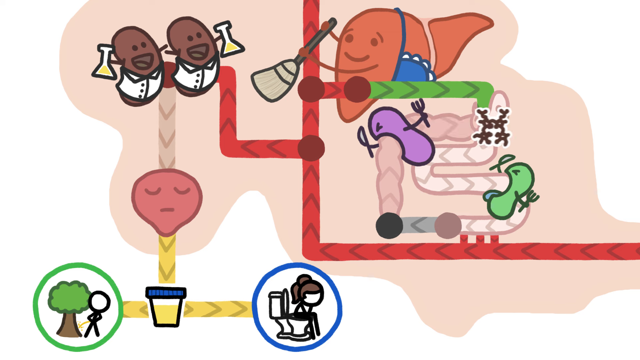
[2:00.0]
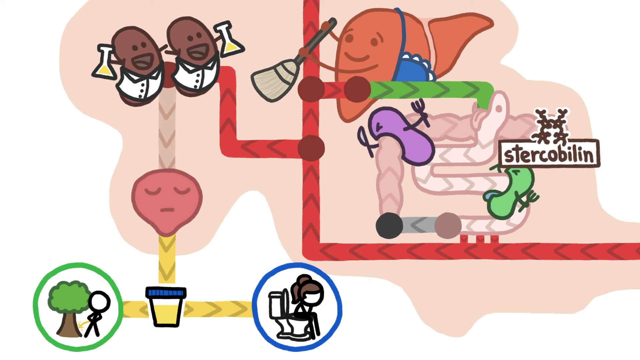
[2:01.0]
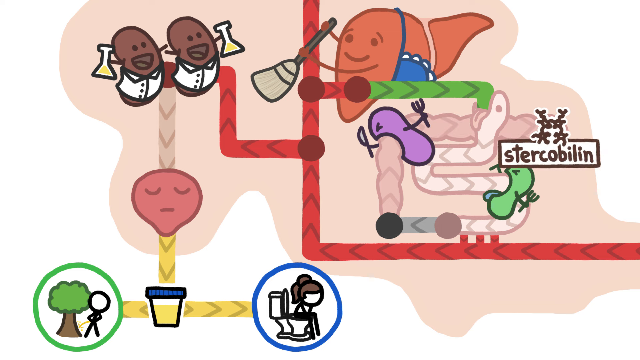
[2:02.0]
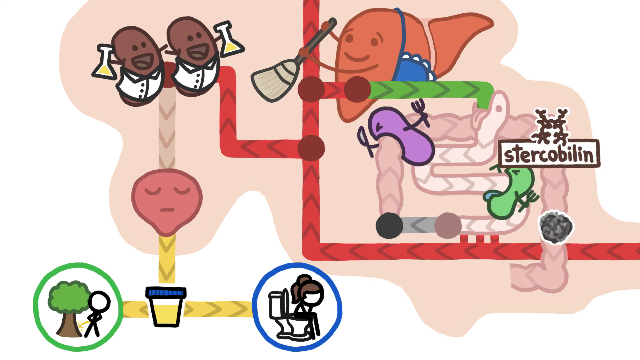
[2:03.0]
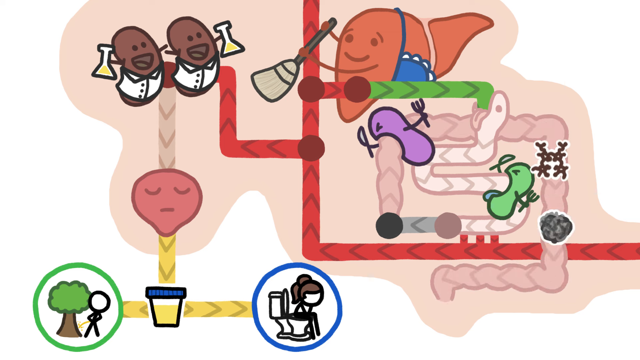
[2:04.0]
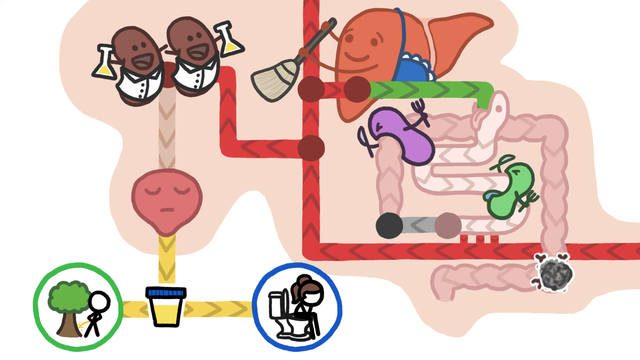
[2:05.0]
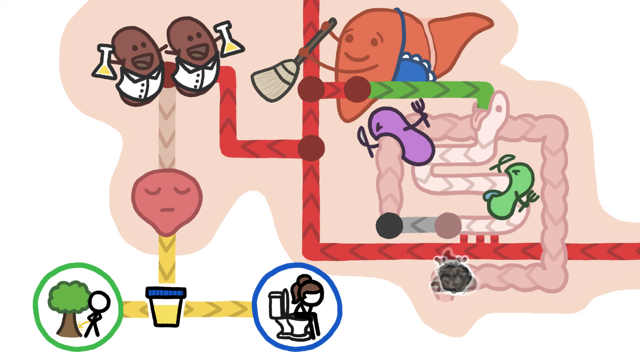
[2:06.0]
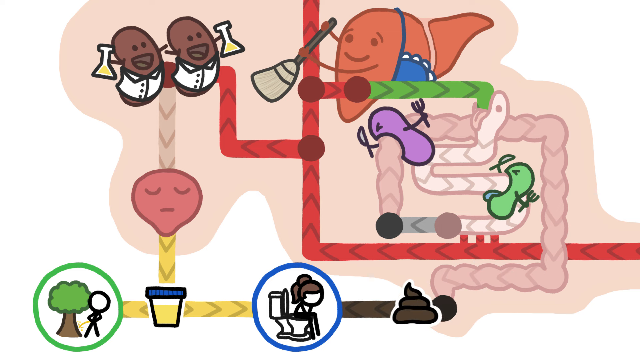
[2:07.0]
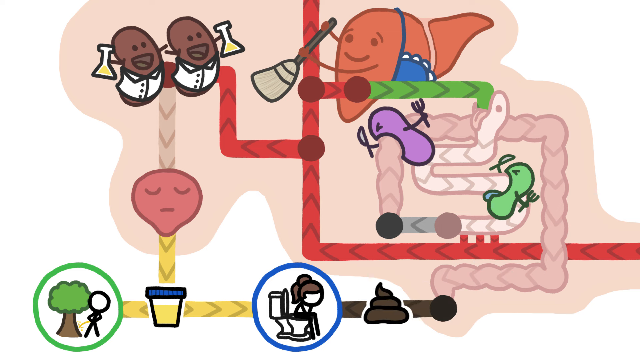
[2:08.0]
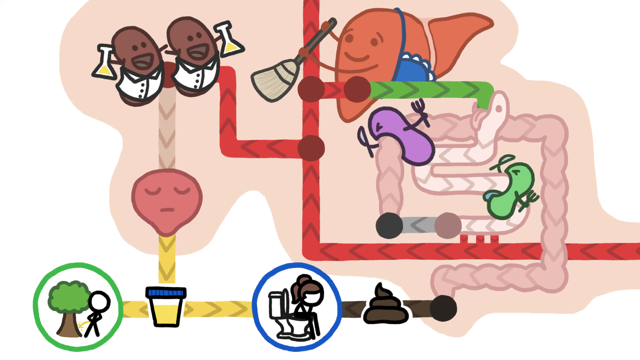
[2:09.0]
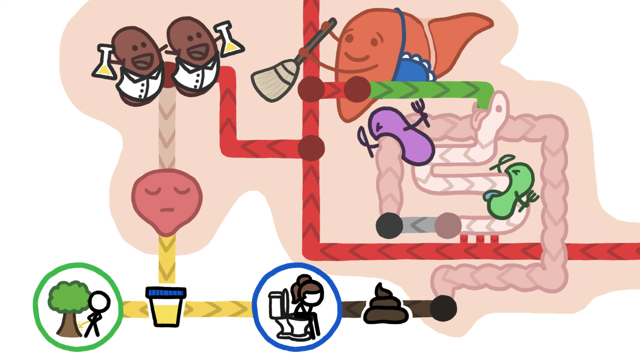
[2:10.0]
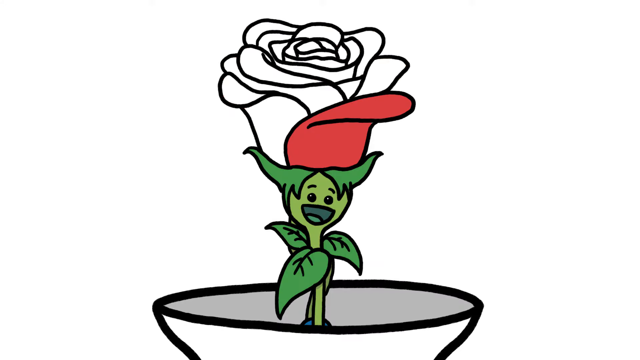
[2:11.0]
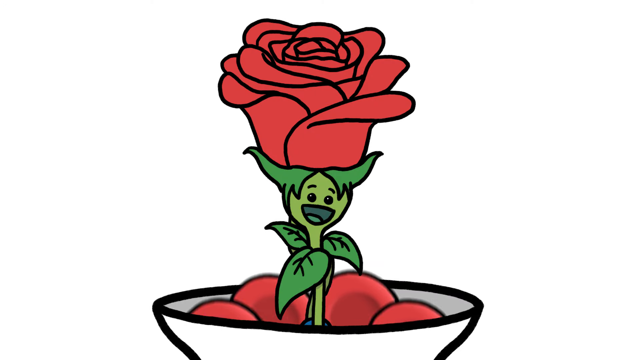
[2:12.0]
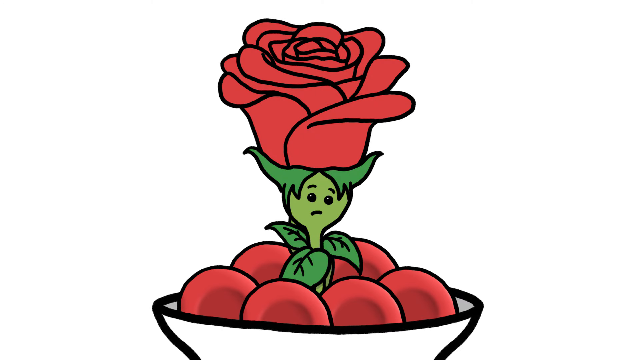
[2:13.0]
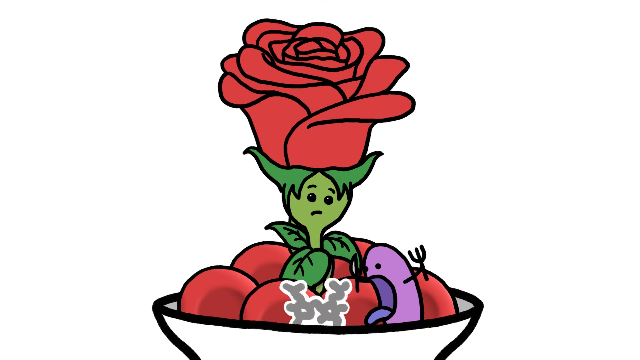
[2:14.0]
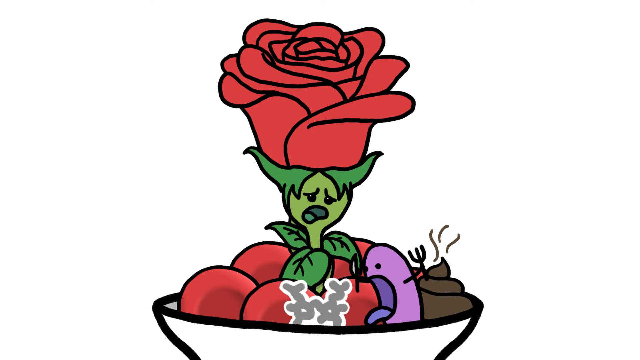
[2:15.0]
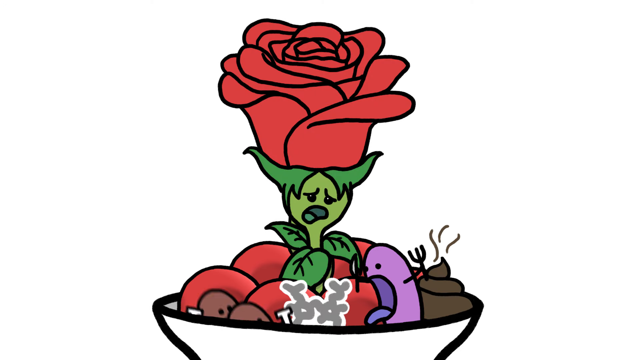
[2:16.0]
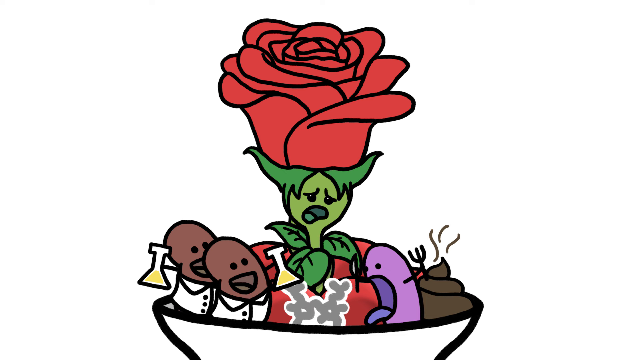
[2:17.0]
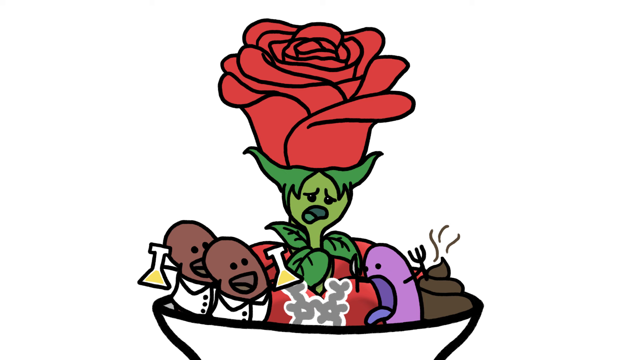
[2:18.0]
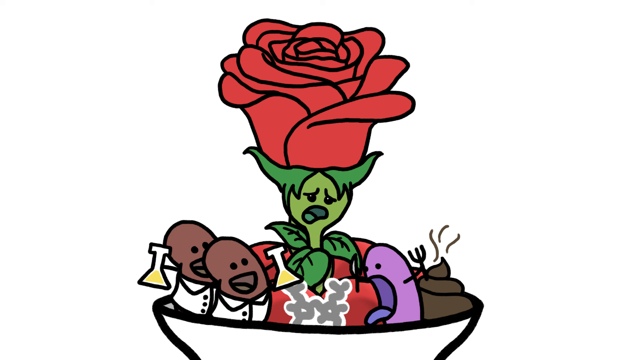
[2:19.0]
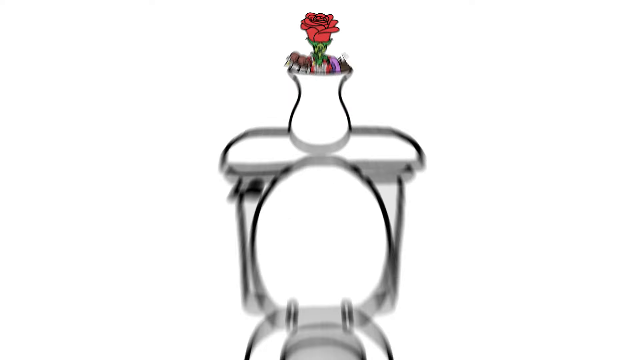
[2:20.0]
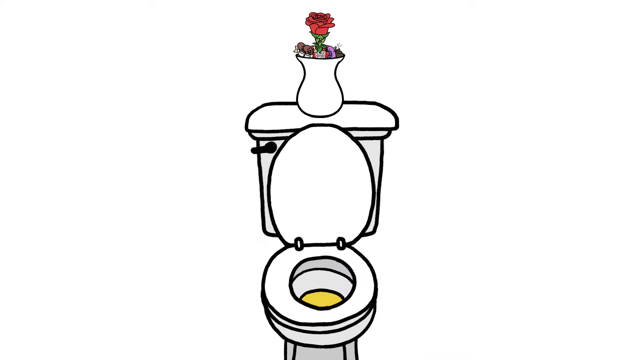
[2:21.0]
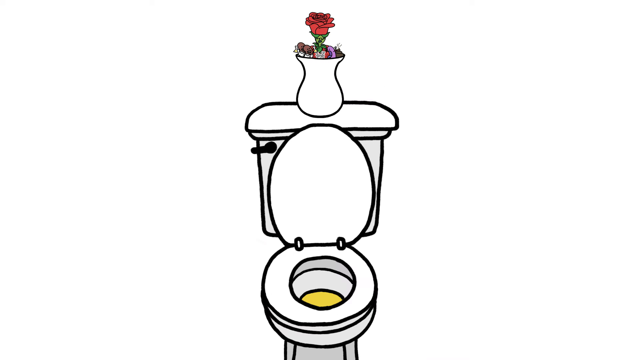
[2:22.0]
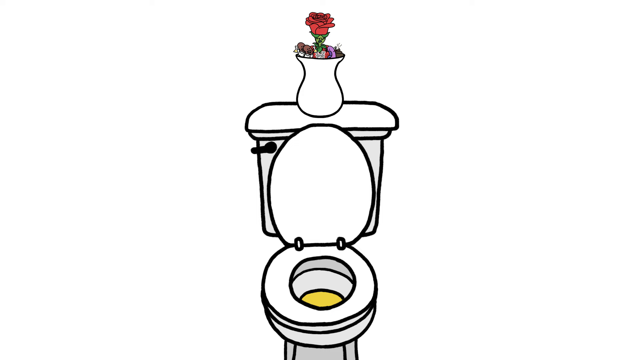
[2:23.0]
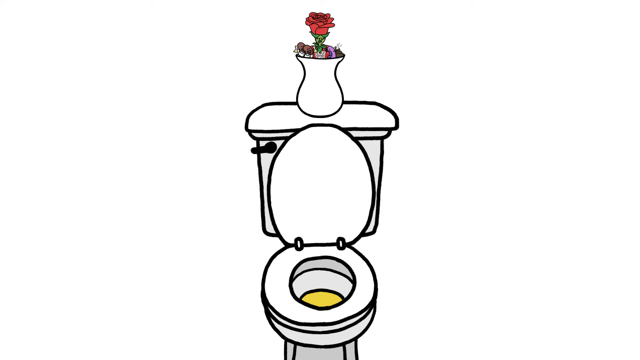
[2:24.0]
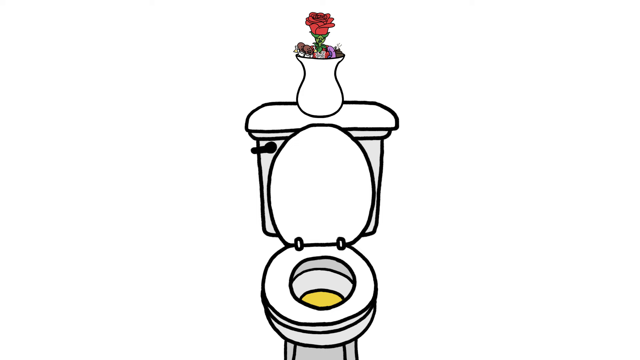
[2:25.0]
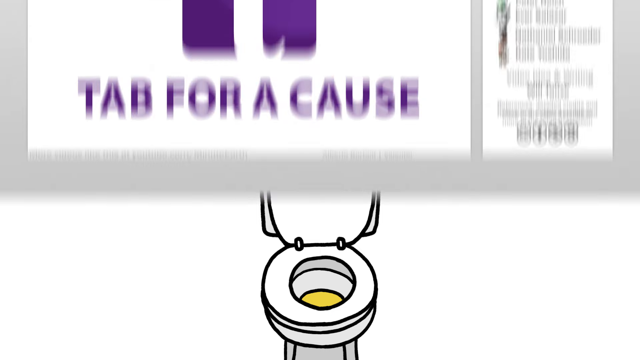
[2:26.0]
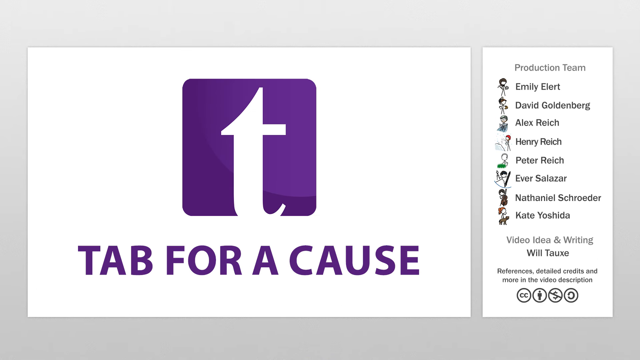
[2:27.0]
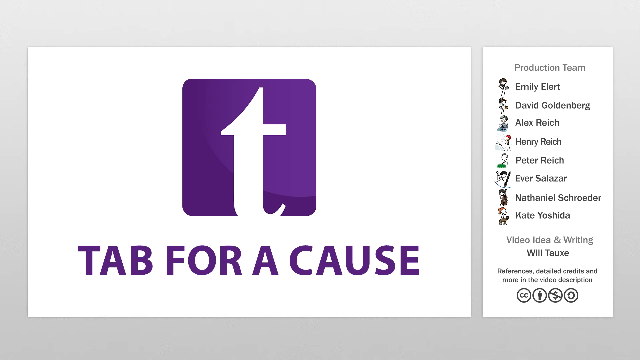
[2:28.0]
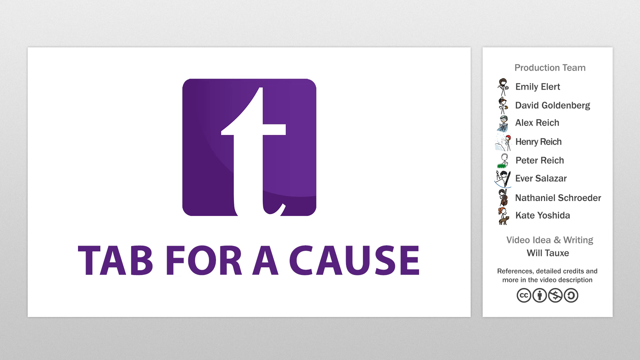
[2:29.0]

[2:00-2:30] In the same diagram, the DNA has gone through the purple peanut and out to the right. It passes behind the snake's head and a label comes up underneath it reading "ster cobilin". From there, a pink line appears downwards and seems to have a grey brain inside it. The DNA comes down and connects with the brain, and they move together, as if stuck together, towards the bottom of the picture. They turn black and then change into one poo, which heads left towards the diagram of the stick figure sitting on the toilet. The video cuts to a picture of a bowl with a green stem coming out of it that has leaves and a face at the top, smiling with its mouth open, with two leaves on its head that look like horns and a rose above. The bowl fills up with red round balls, and the figure looks a bit upset. DNA, a purple peanut and poo appear inside the bowl, the stem of the rose starts to look very concerned, and the two brown peanuts holding yellow liquid also appear. The view pans away to reveal that it is actually a vase on top of a white toilet whose lid is open, with yellow liquid inside. A sign comes down with a big square purple background and a white "T" in the middle, and underneath in purple writing the words "Tab for a Cause". To the right are the words "Production Team" and the names Emily Ellert, David Goldenberg, Alex Wright, Henry Wright, Peter Wright, Eva Salazar, Nathaniel Skrodna and Katie Yoshida, and at the end, writing by William Talks.